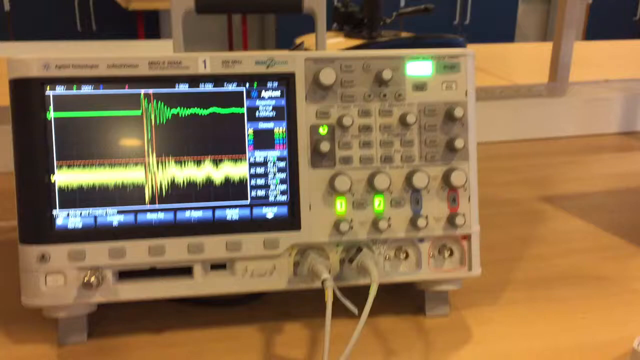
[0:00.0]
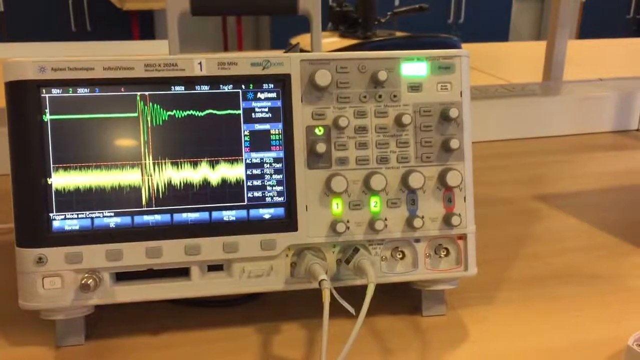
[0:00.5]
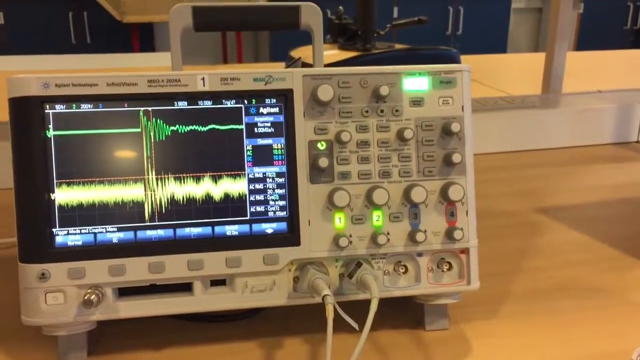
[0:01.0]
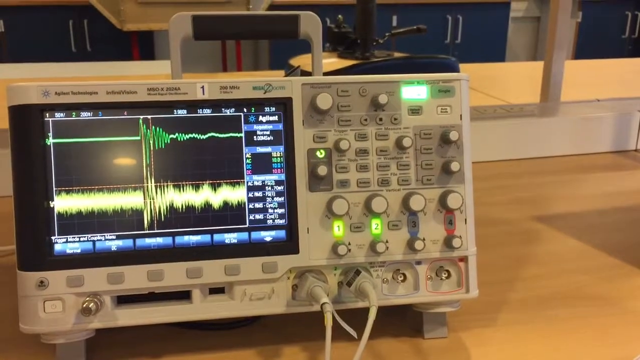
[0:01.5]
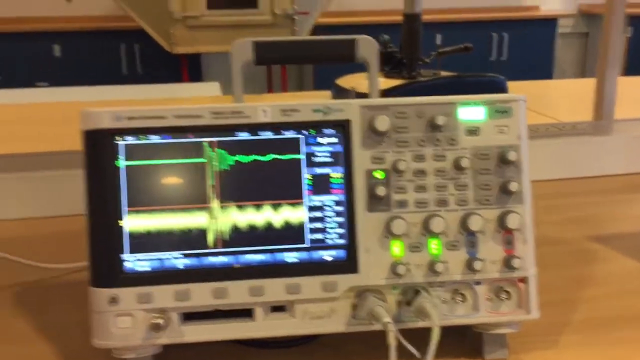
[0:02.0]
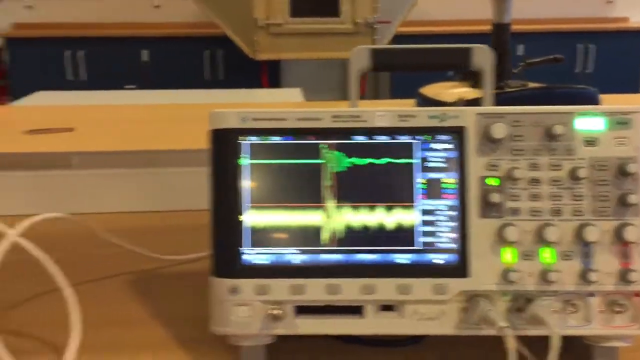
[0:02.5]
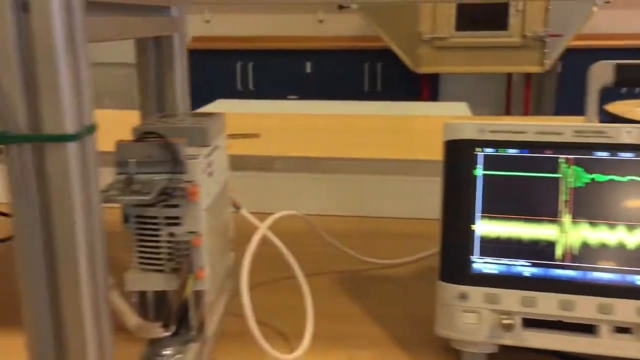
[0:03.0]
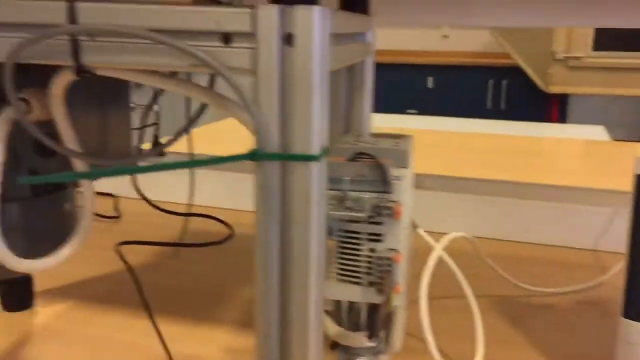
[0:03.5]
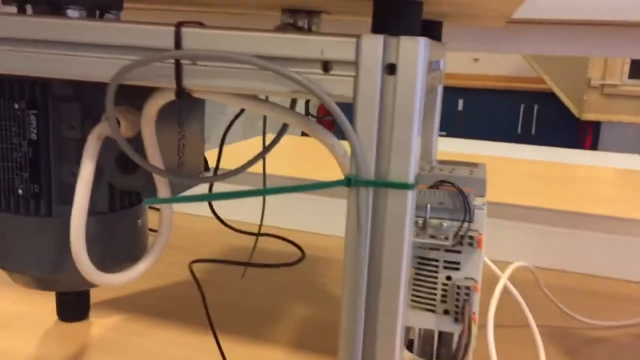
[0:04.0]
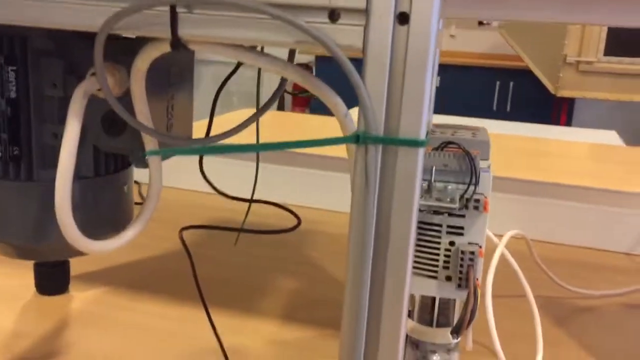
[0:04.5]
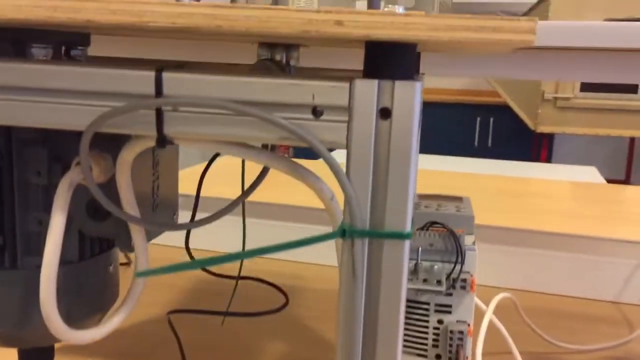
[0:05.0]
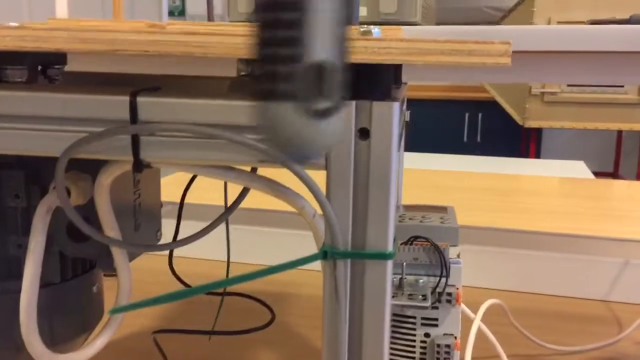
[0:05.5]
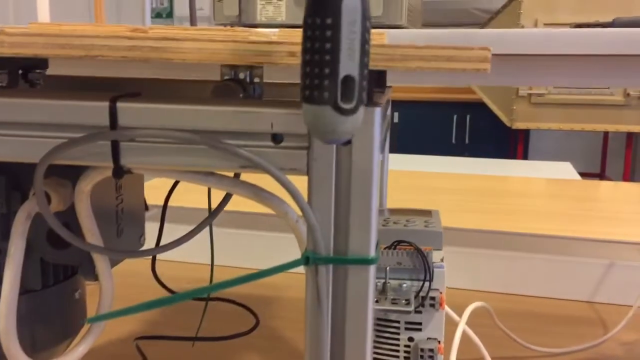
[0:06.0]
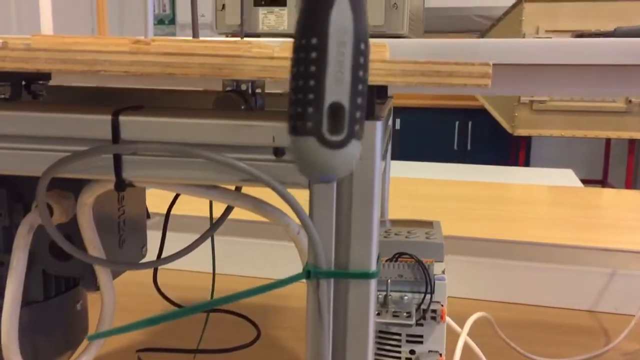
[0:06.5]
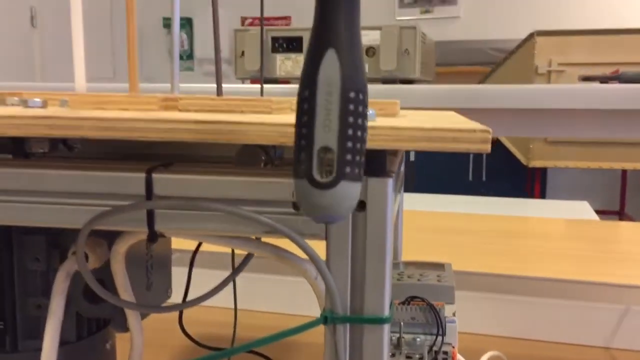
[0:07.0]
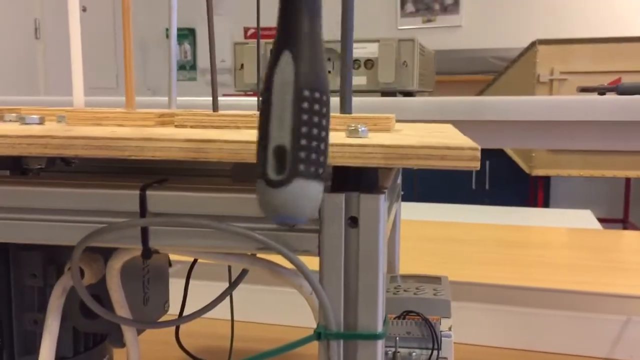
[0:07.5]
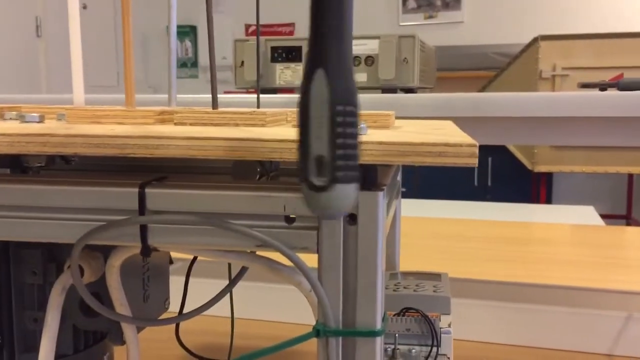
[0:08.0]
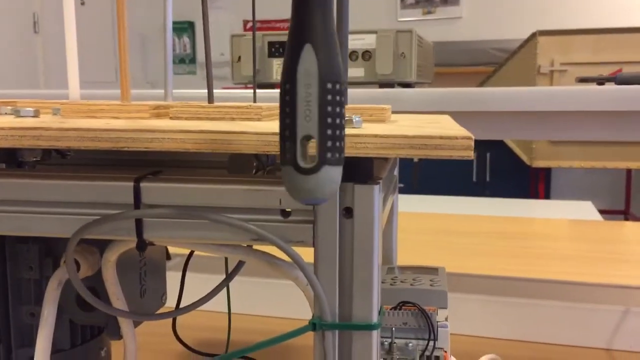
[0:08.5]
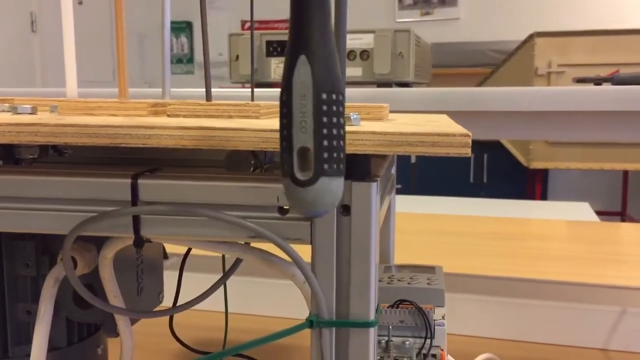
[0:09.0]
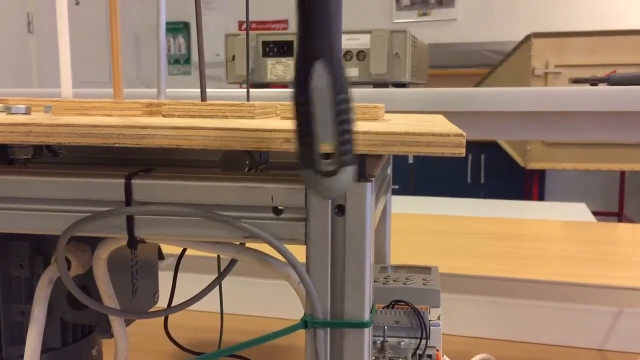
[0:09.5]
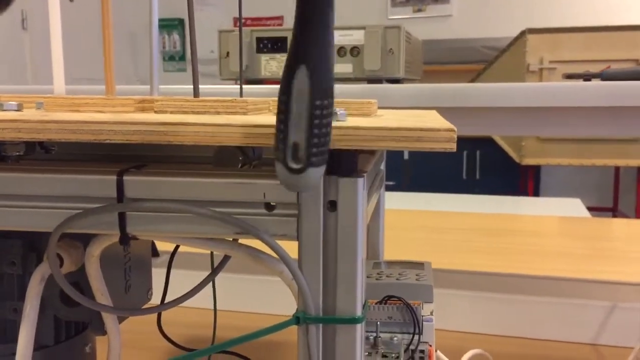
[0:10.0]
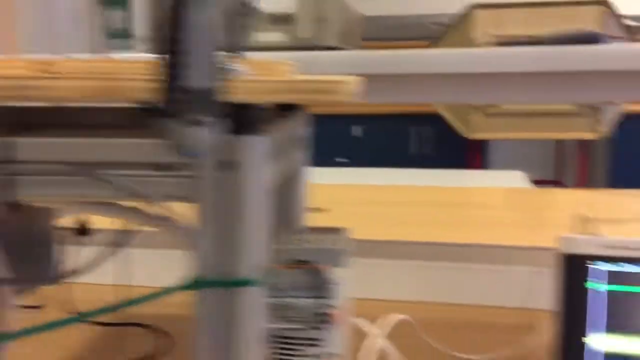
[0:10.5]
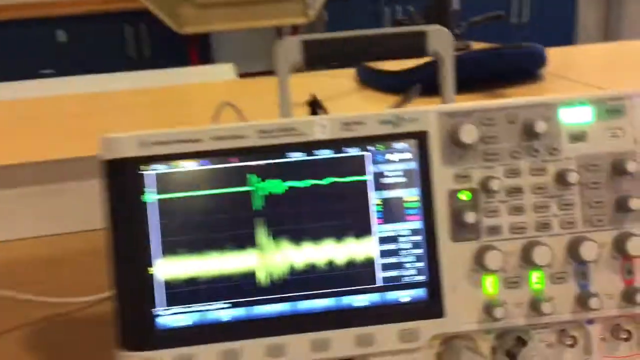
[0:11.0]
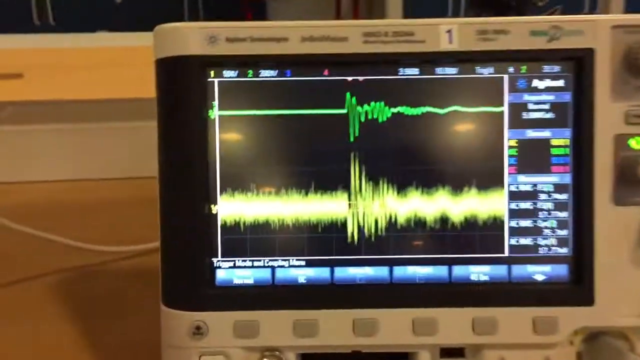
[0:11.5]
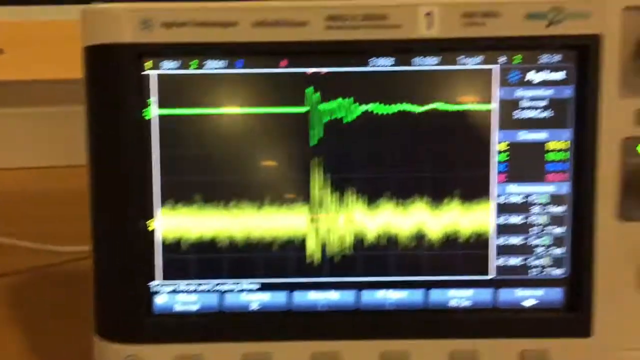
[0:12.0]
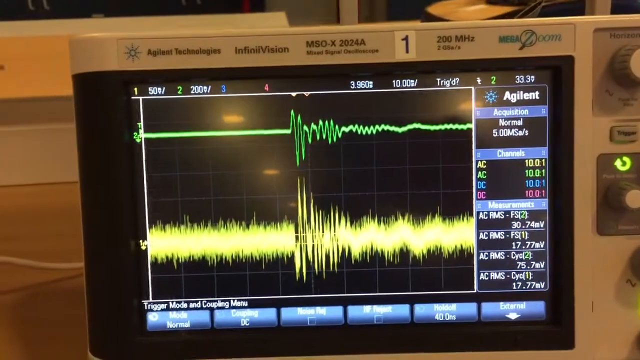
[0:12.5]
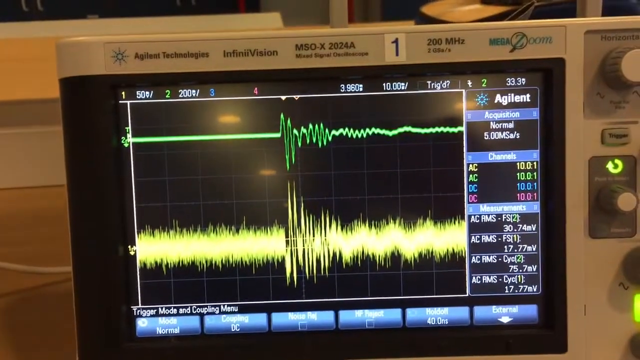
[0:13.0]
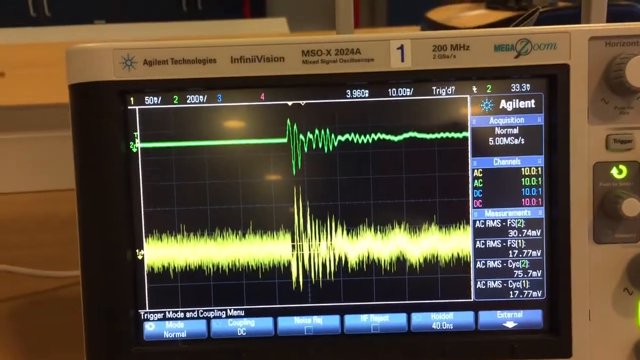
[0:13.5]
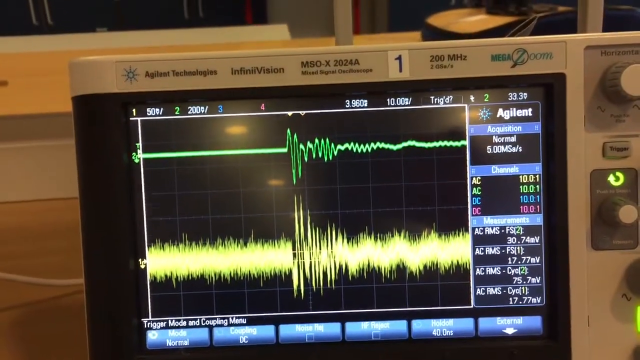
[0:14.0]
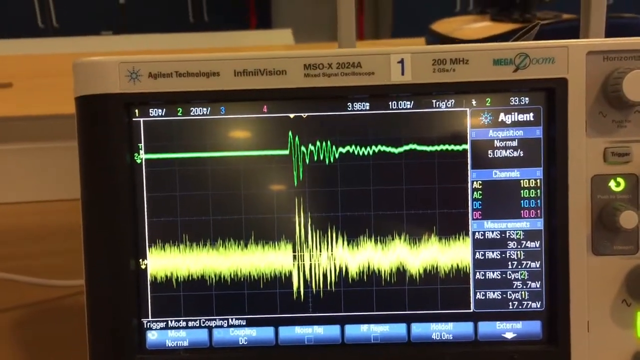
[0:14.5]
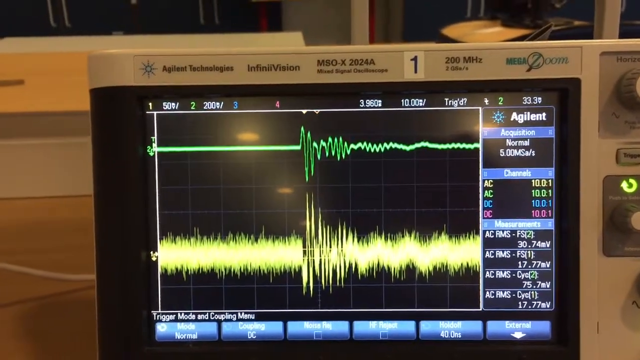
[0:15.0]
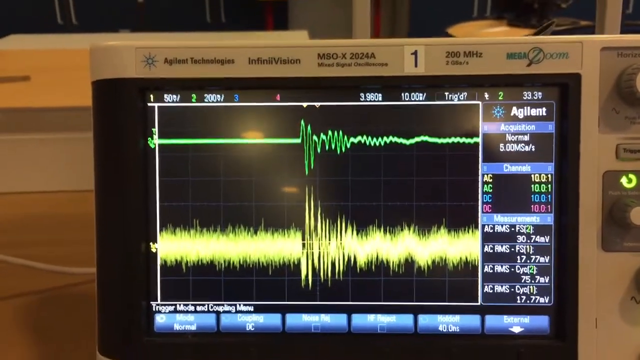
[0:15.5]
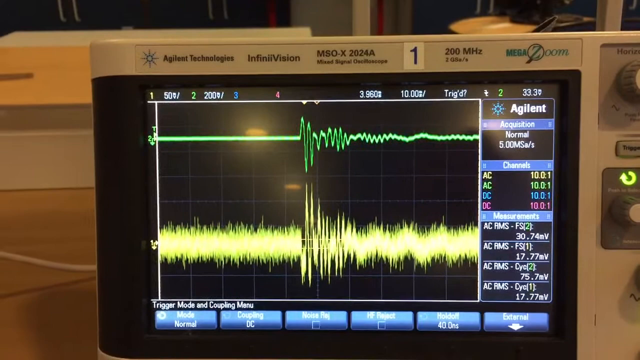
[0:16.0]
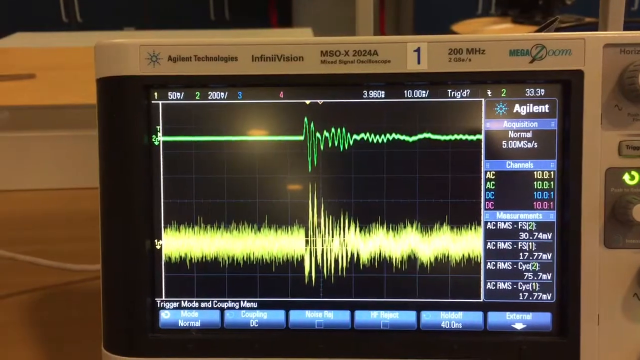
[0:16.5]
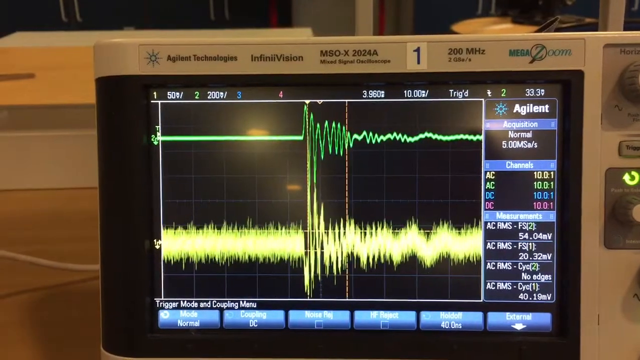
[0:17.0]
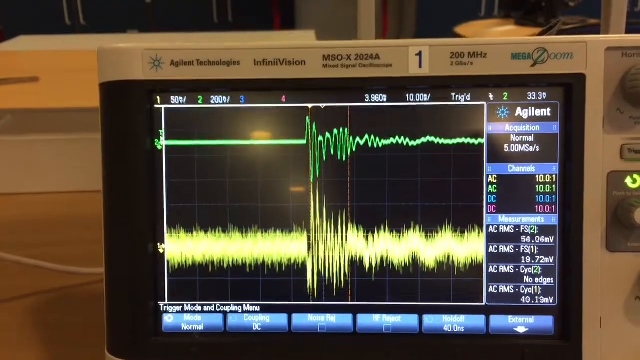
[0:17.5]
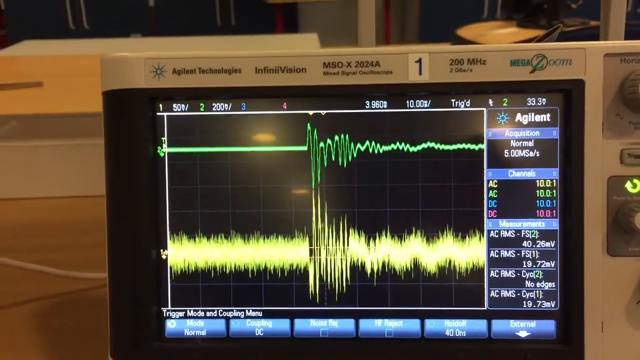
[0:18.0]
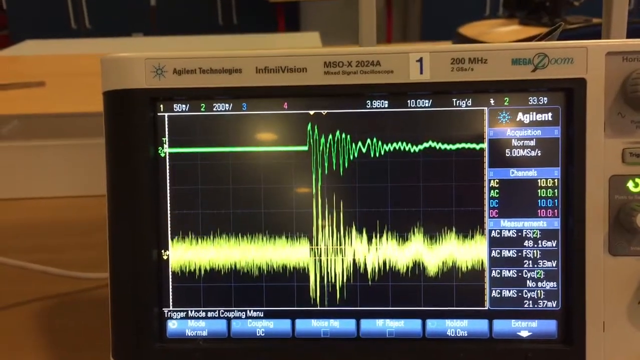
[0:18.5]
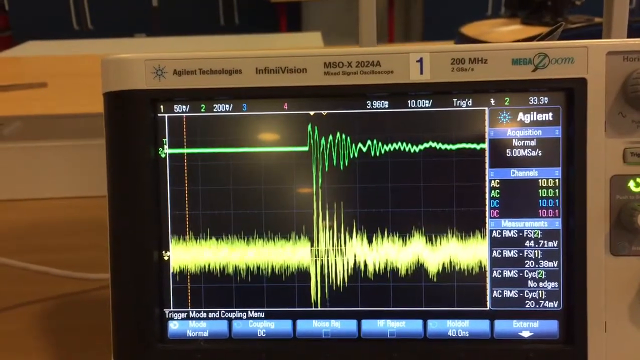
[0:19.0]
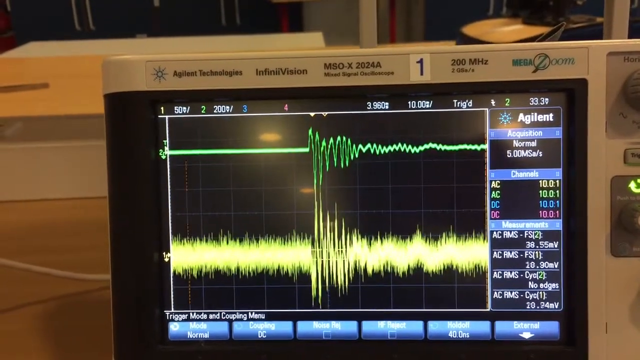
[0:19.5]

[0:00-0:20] A man is showing some machines and apparently describing how one of them works. The machine seems to be some kind of shock observer that records electric shock and displays it on its screen. When the man hits a board, probably a shock receptor, the machine records the shock wave, and the result is then shown on the machine's screen. He uses some kind of tool to hit the object. There are a lot of tools here, along with cables and buttons, which are for controlling the machine. The machine is placed on a table. The setting looks like some kind of lab, with proper lighting and power. The man seems to be showing how the shock wave recording works and how the machine reads the shock waves when it is hit by something hard.